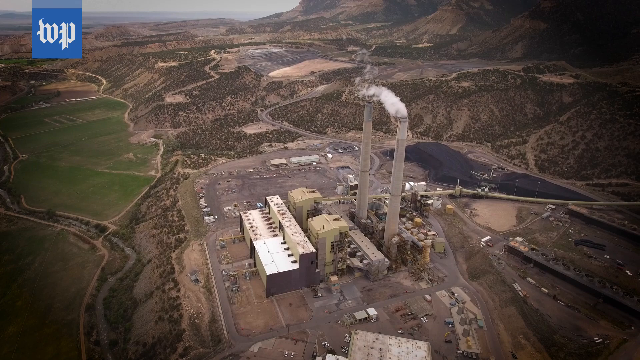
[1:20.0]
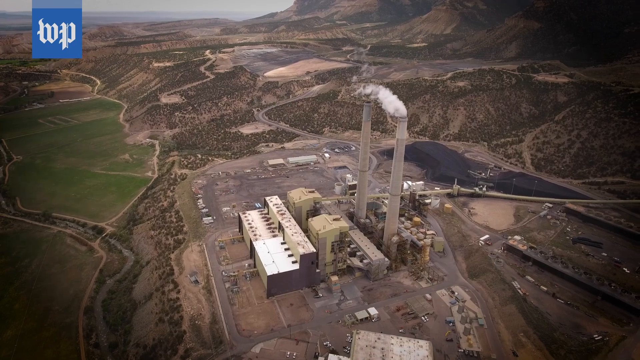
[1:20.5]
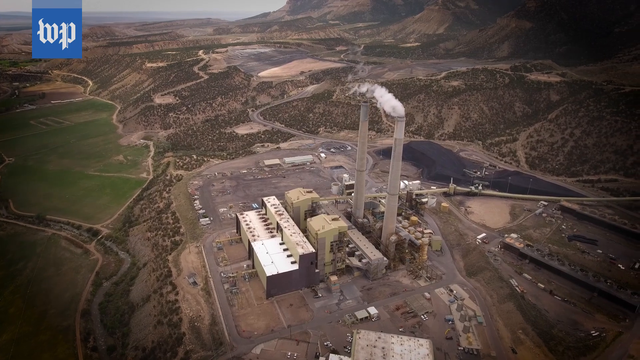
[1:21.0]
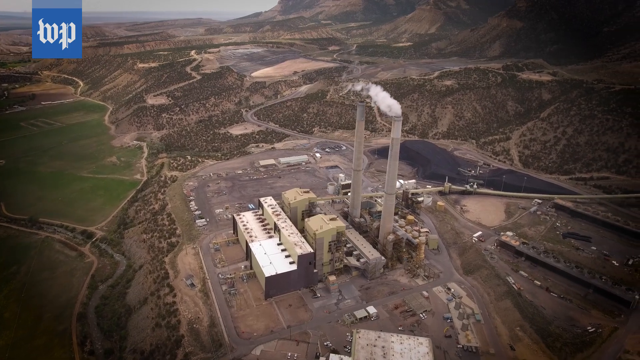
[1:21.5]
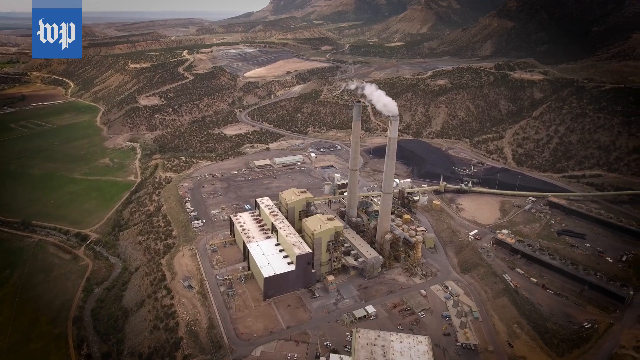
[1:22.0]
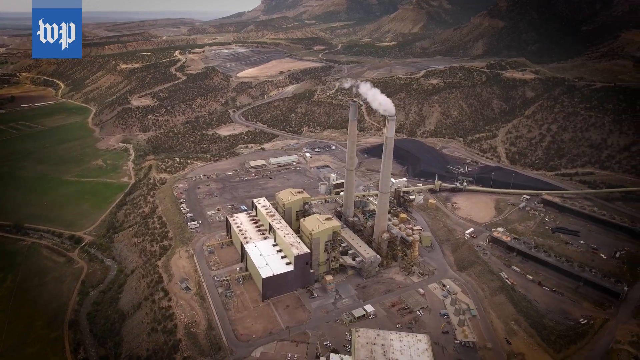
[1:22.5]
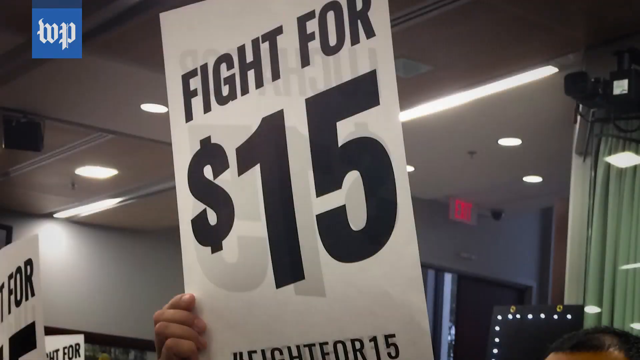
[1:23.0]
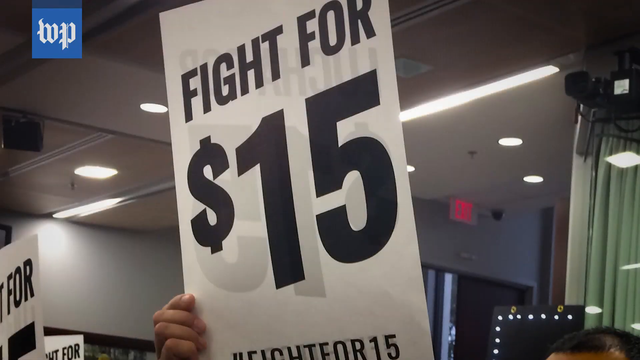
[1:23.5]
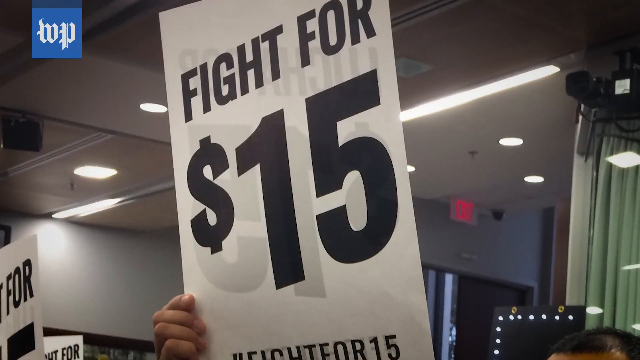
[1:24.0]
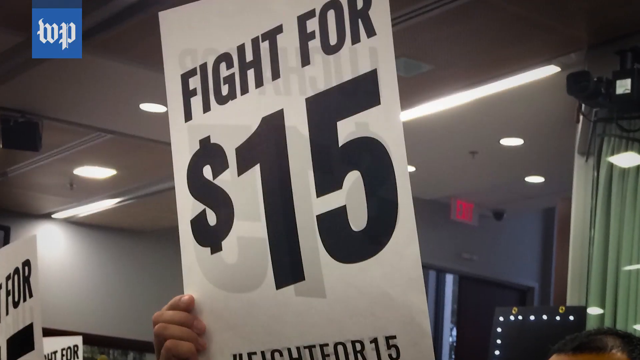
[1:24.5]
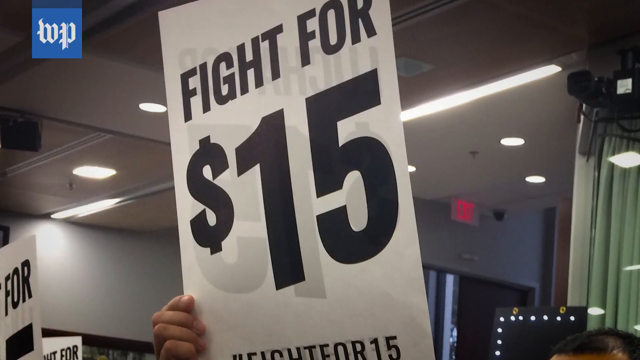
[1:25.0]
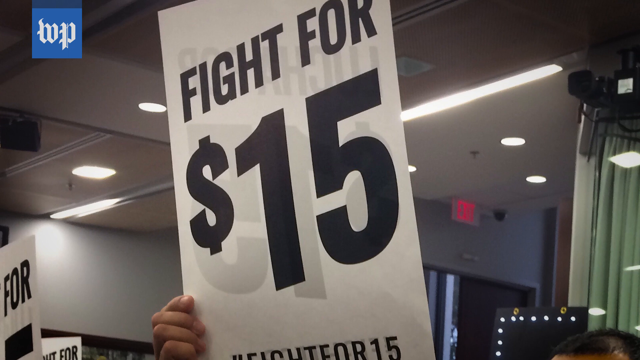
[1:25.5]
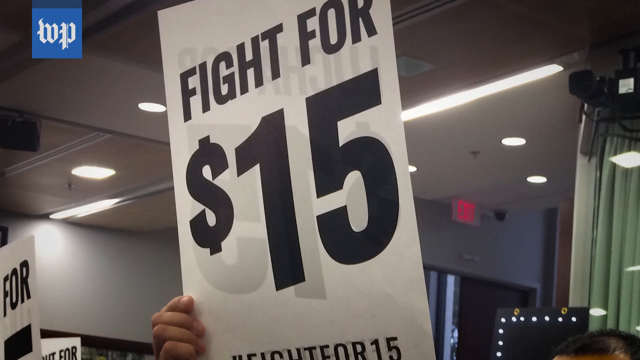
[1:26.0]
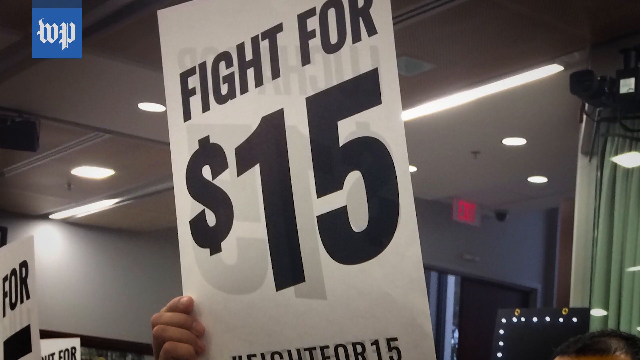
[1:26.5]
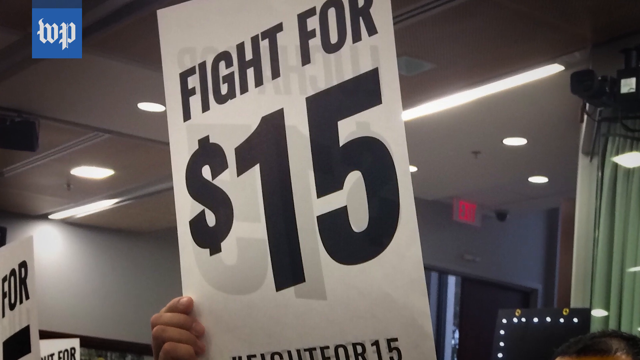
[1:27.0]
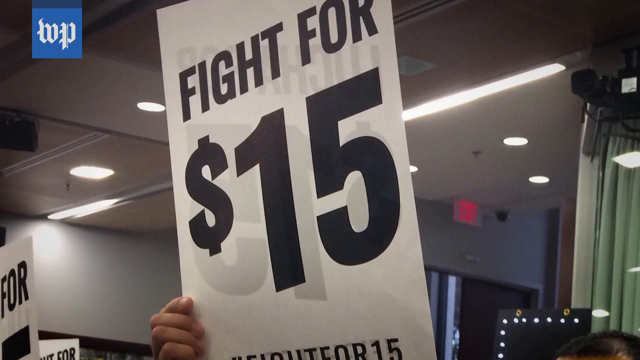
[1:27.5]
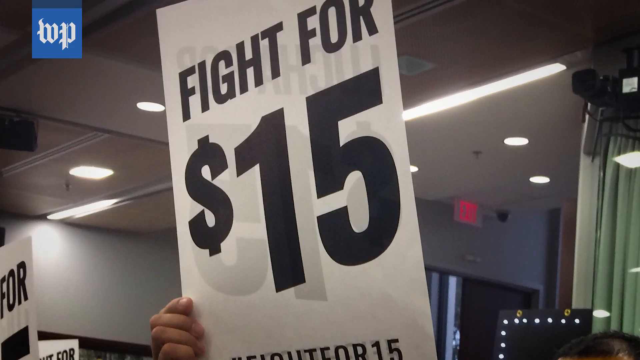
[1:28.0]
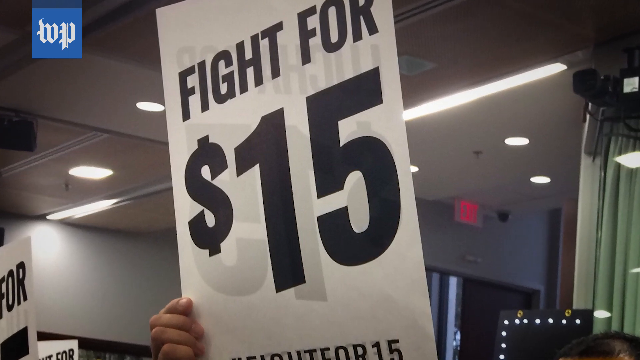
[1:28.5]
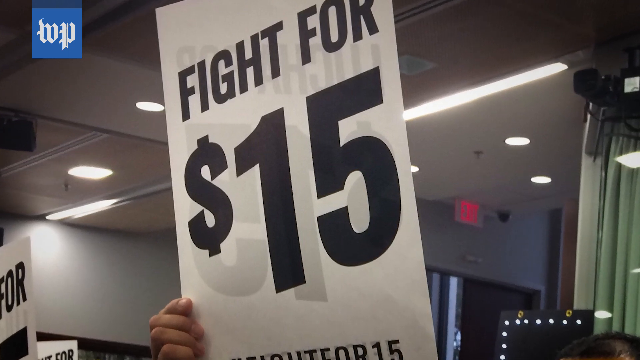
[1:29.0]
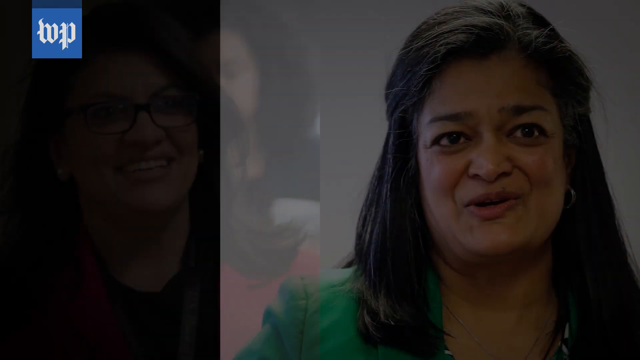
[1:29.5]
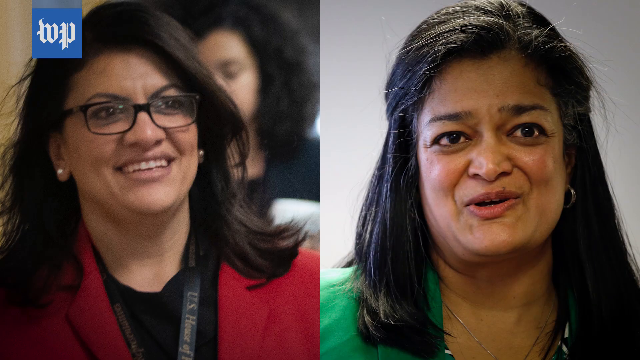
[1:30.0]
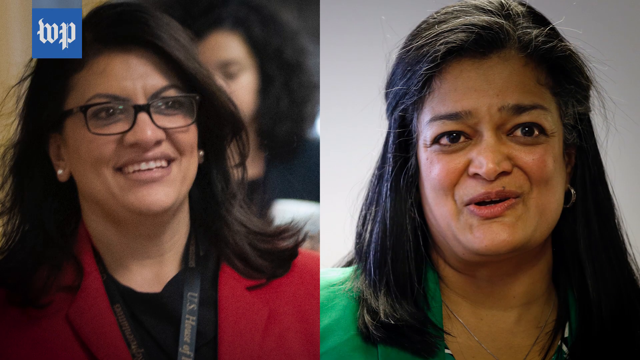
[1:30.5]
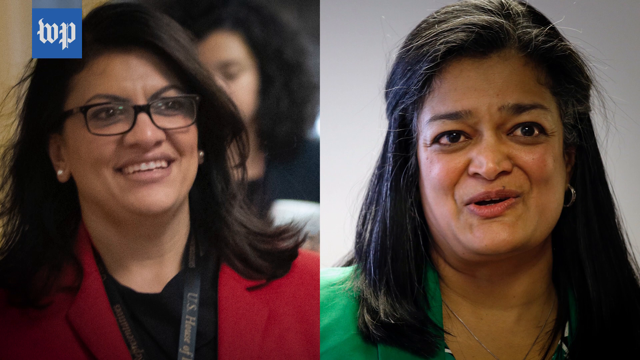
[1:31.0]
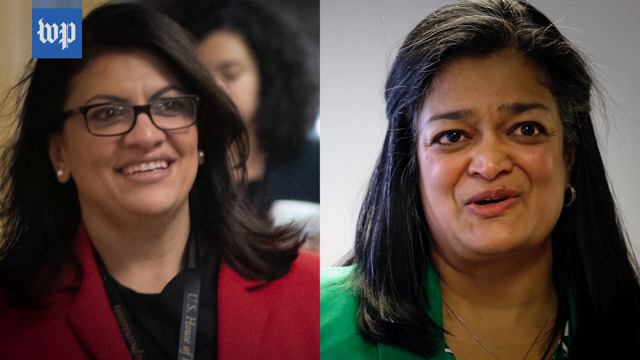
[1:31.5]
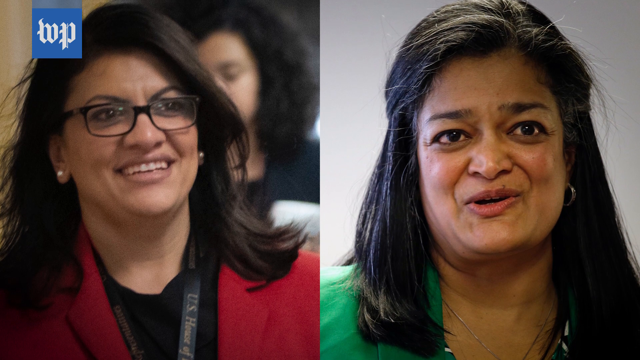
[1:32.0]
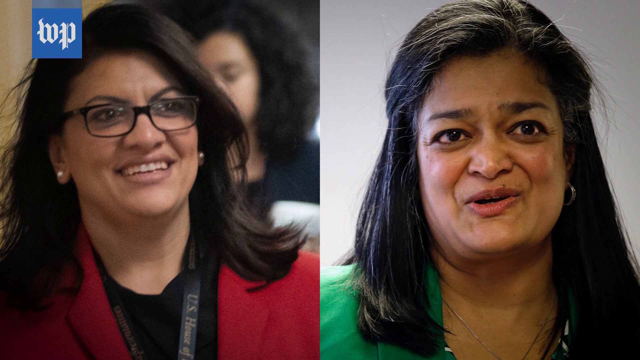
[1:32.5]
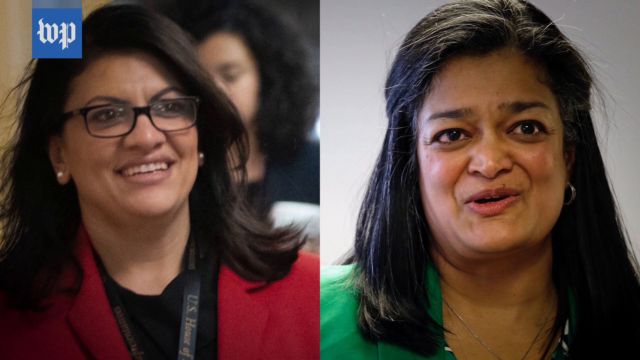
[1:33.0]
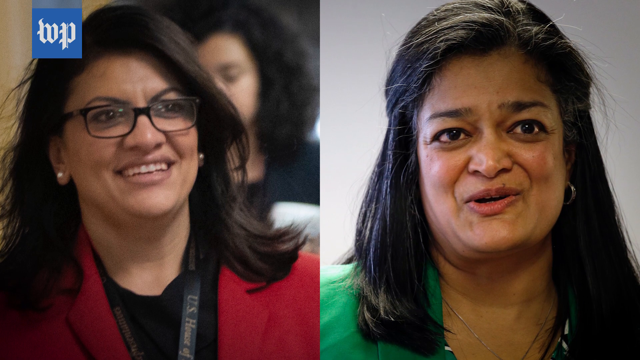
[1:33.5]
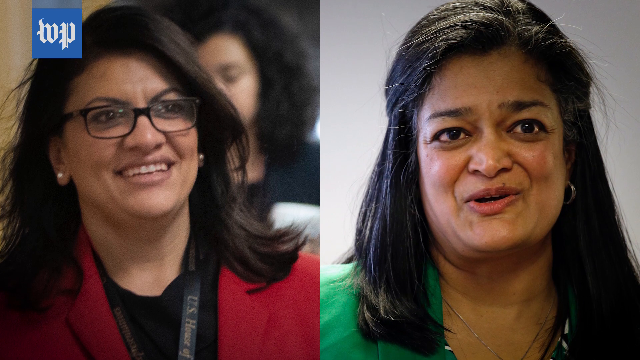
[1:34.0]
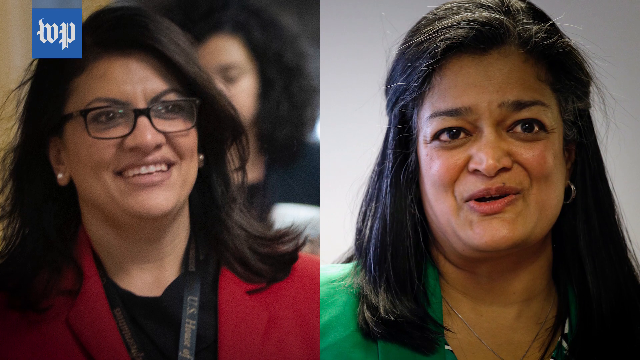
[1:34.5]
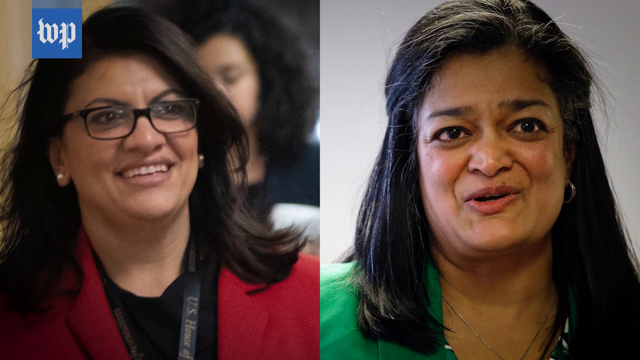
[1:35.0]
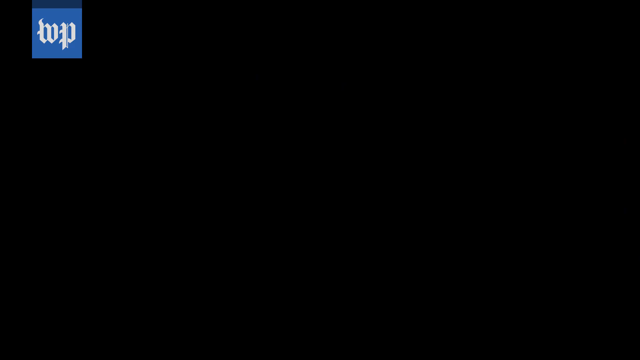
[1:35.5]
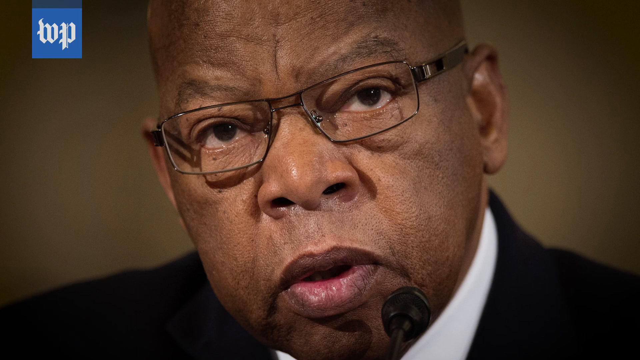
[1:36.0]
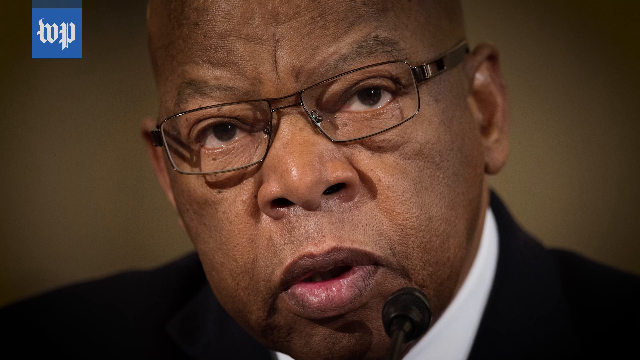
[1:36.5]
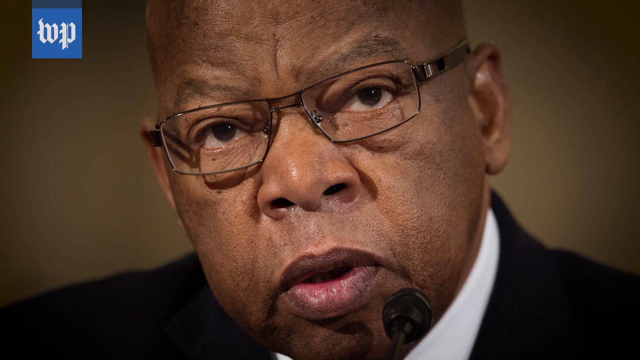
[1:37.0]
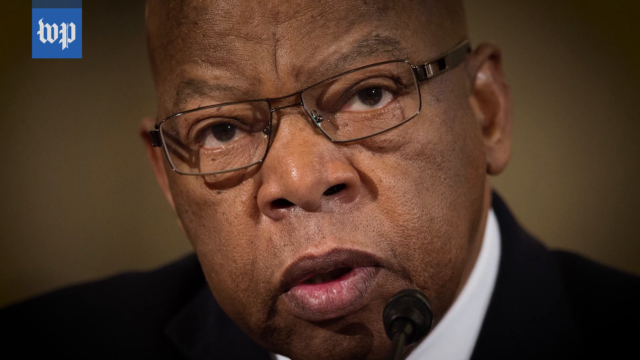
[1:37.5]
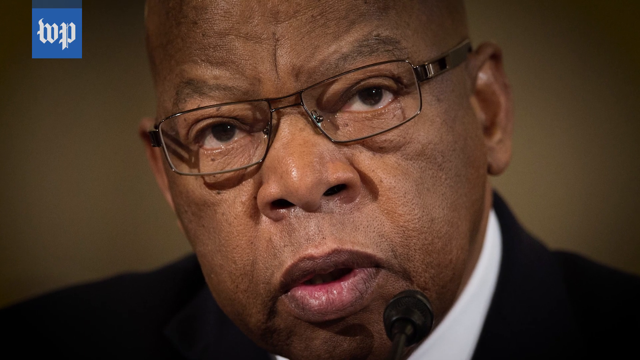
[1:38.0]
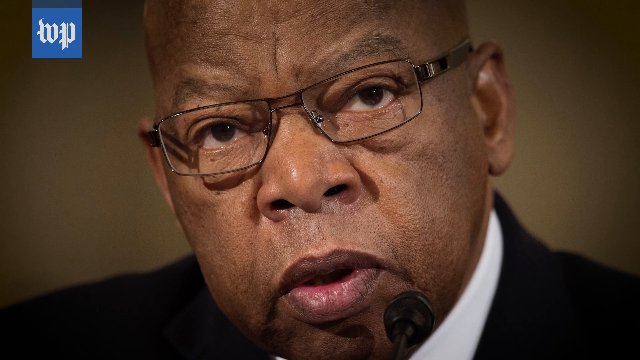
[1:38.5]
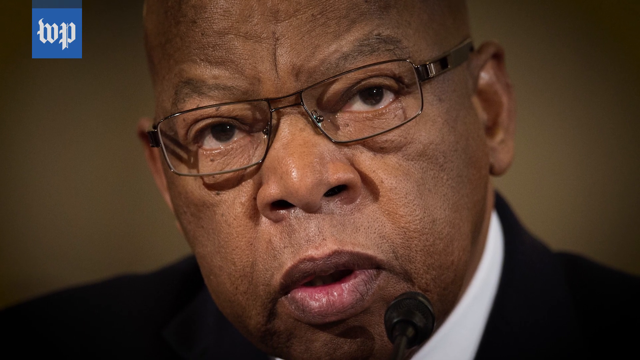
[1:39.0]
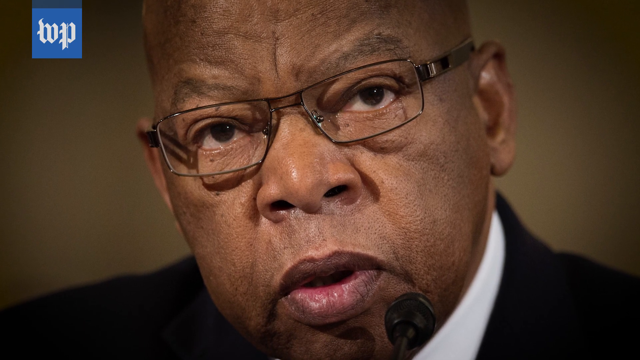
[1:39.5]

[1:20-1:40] A big factory is shown, probably producing gases that pollute the environment; the area around it looks barren, gray and dark. A sign reads "Fight for $15," possibly about a minimum wage. Pictures of two middle-aged women who look Indian or Hispanic follow; one wears glasses and one does not, and they are different women. One works for the U.S. House of Representatives, and the other is possibly a senator. The video then shows an old black man who looks like a judge, possibly Thurgood Marshall.